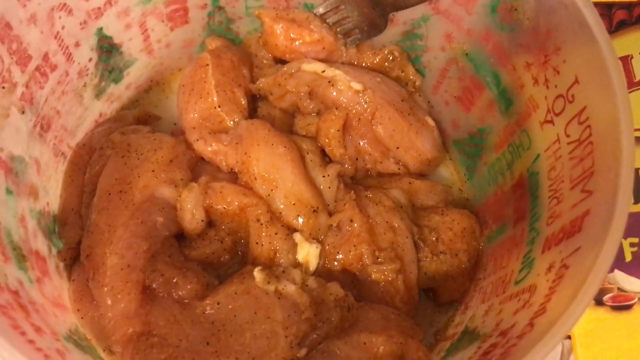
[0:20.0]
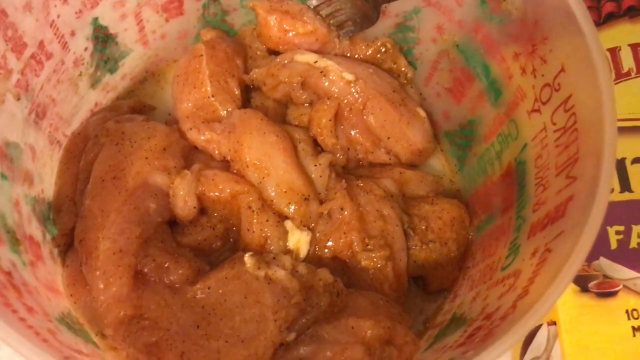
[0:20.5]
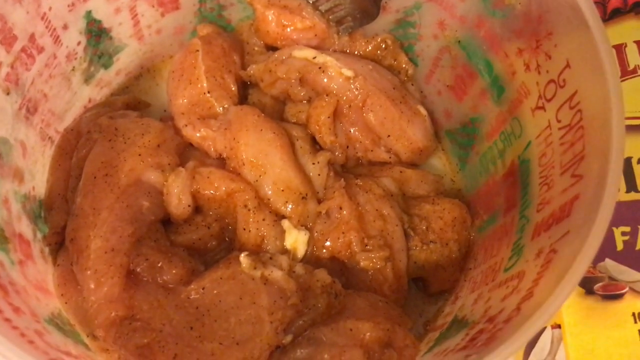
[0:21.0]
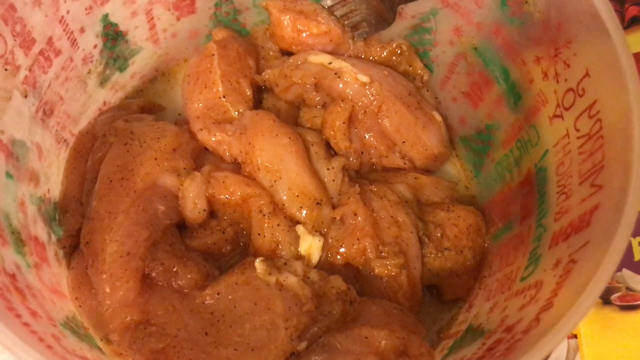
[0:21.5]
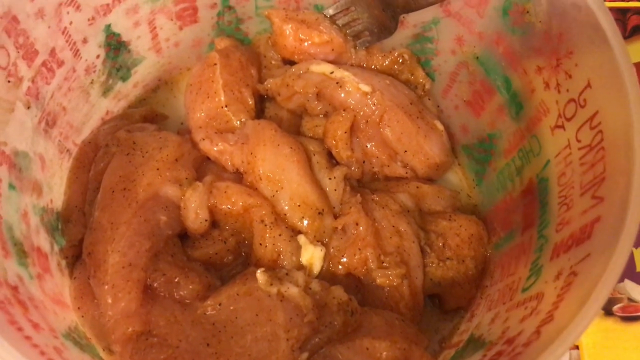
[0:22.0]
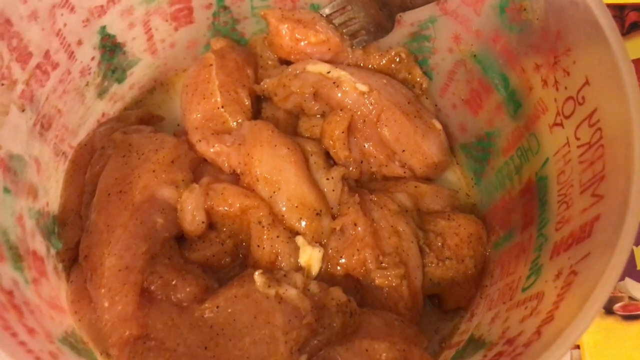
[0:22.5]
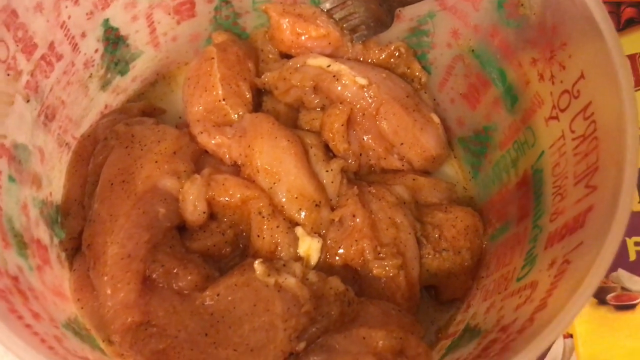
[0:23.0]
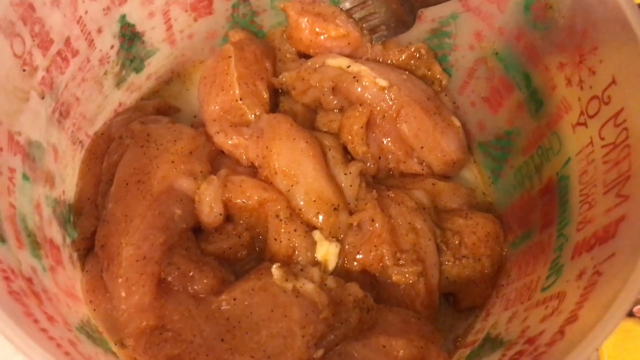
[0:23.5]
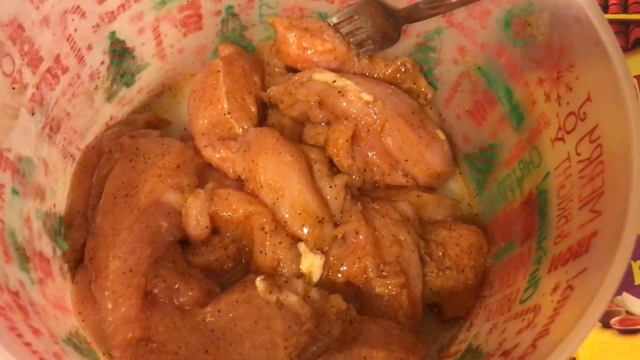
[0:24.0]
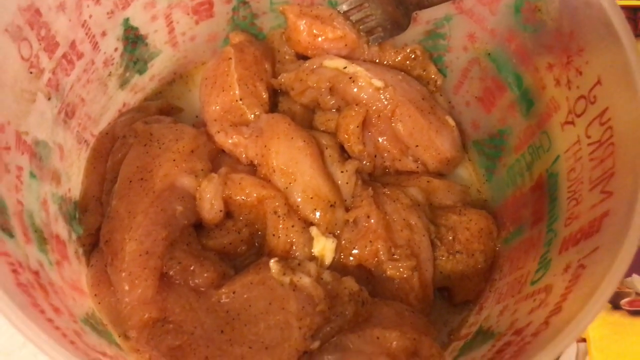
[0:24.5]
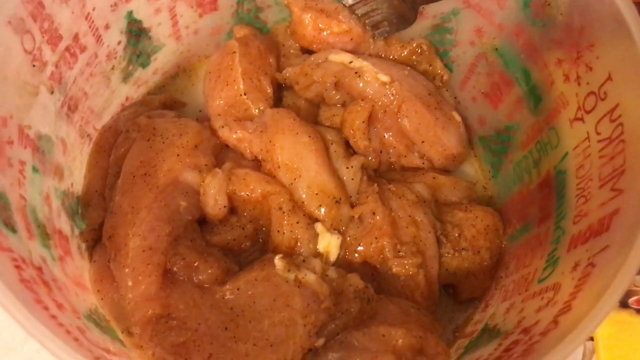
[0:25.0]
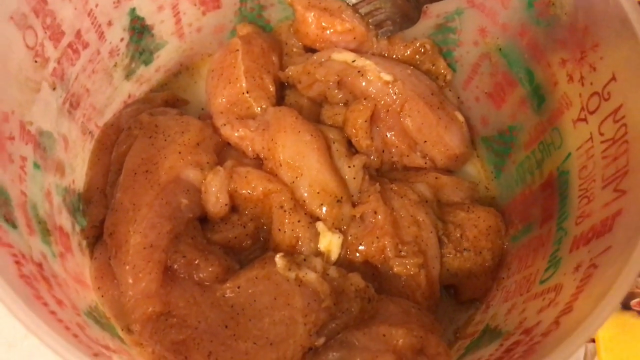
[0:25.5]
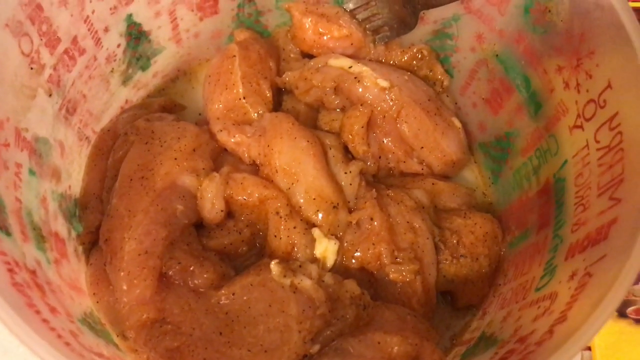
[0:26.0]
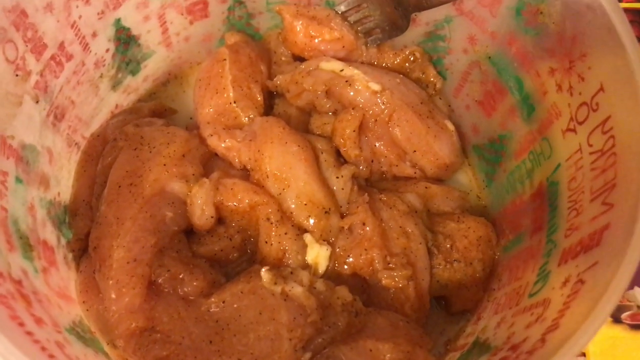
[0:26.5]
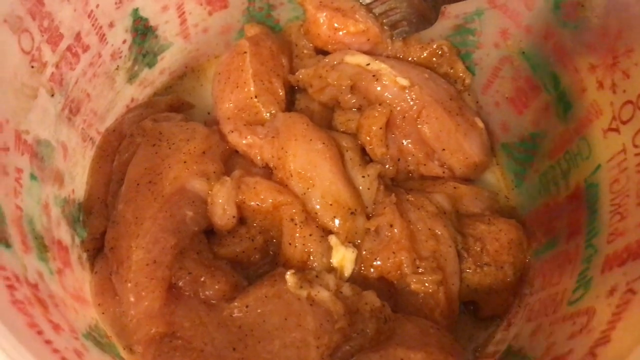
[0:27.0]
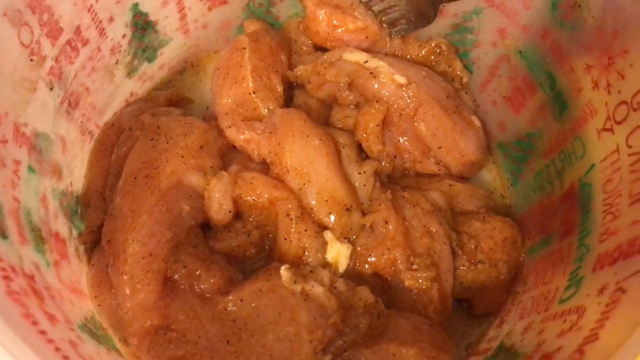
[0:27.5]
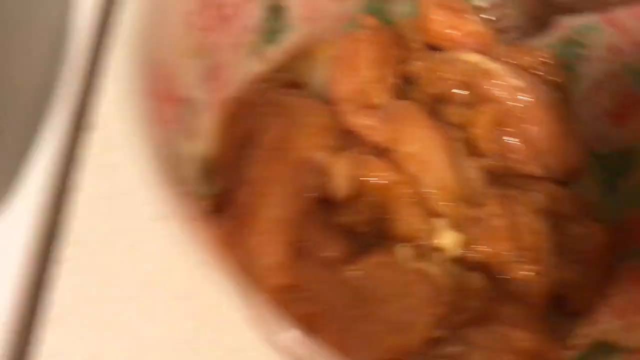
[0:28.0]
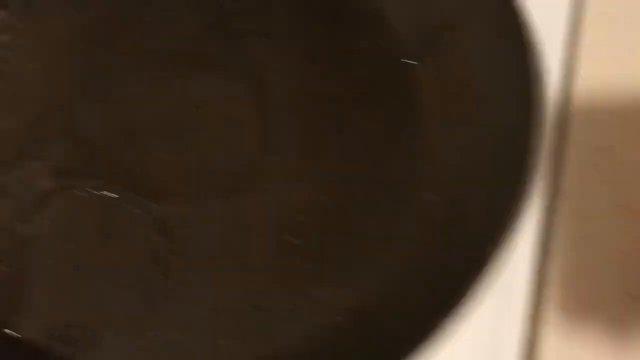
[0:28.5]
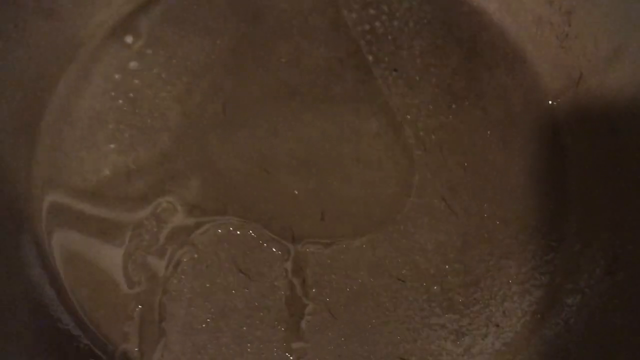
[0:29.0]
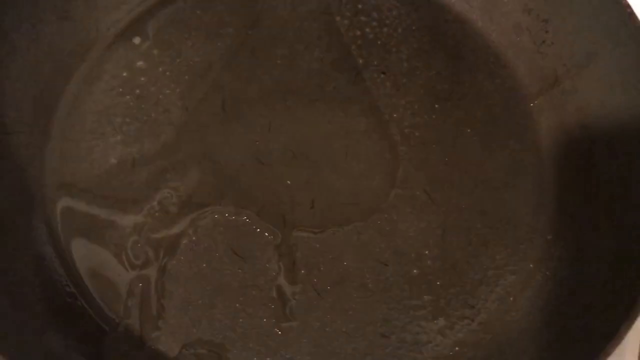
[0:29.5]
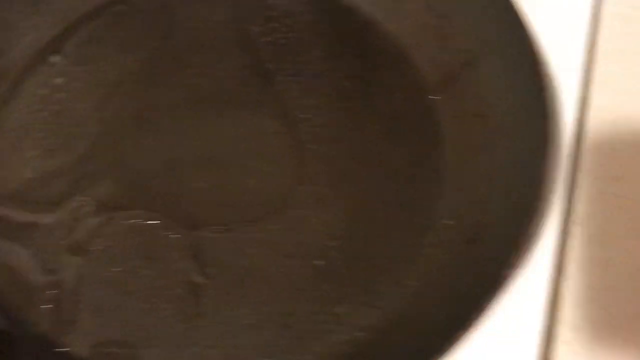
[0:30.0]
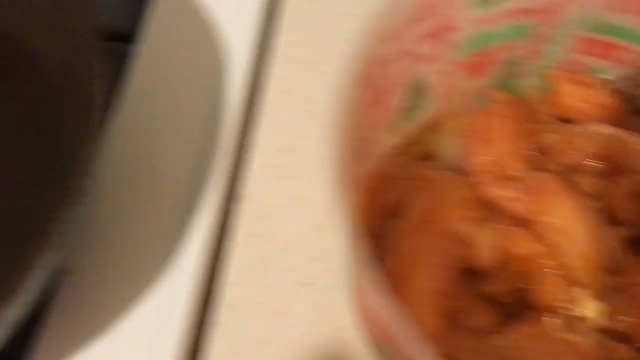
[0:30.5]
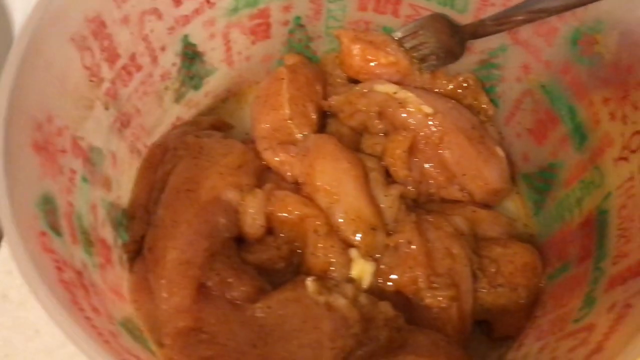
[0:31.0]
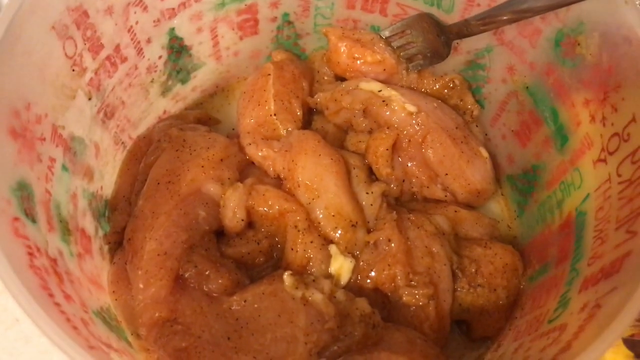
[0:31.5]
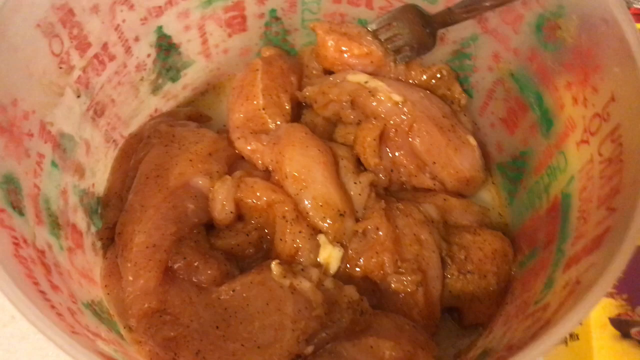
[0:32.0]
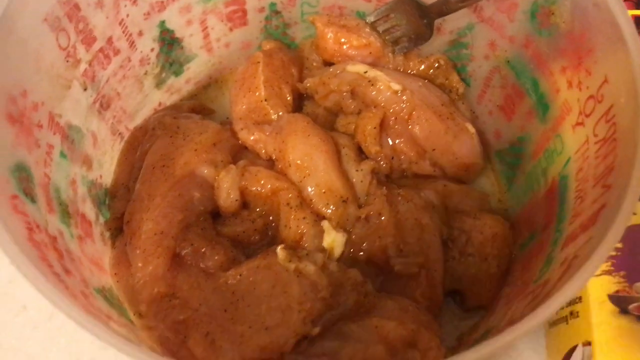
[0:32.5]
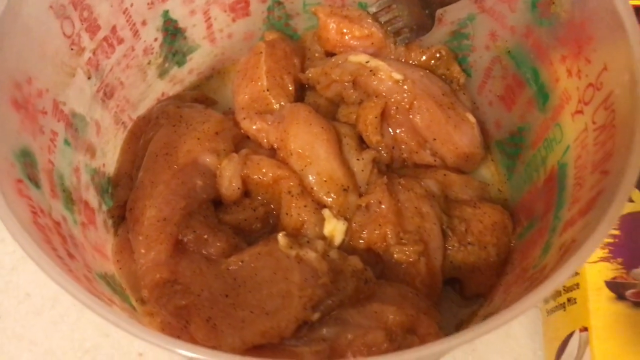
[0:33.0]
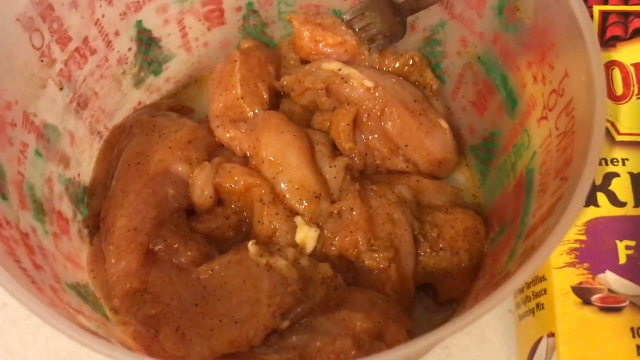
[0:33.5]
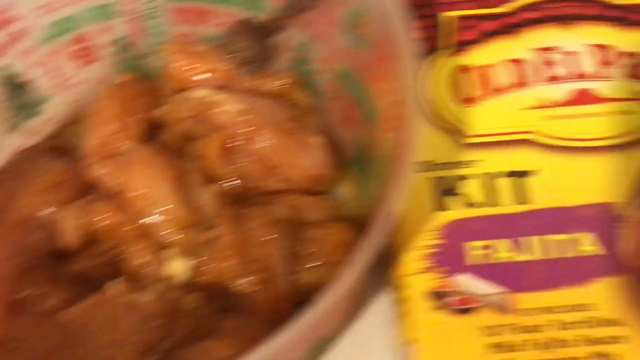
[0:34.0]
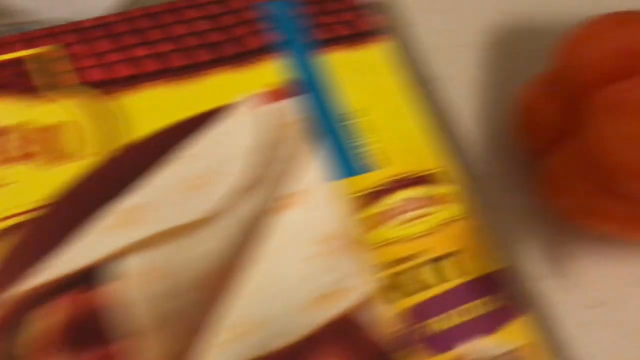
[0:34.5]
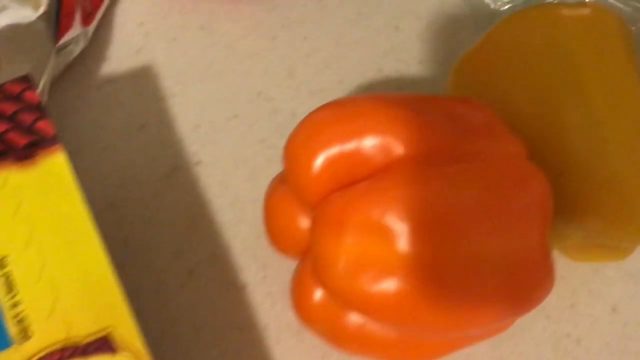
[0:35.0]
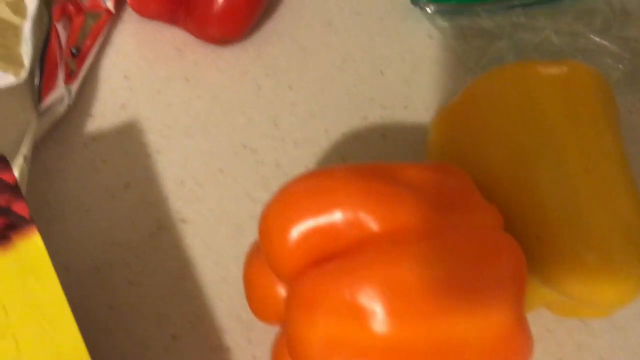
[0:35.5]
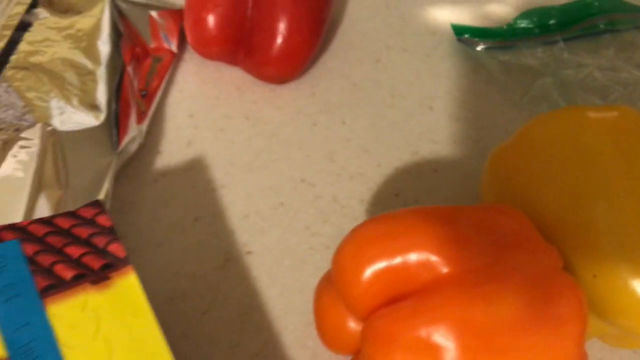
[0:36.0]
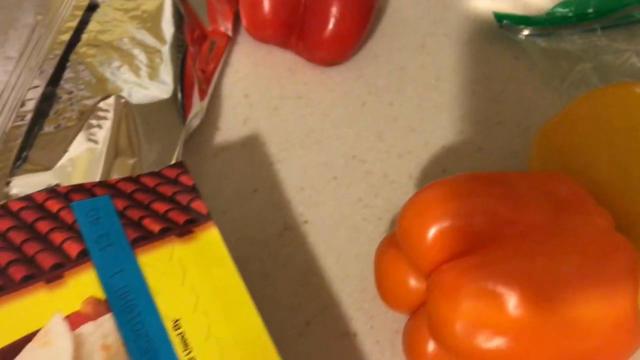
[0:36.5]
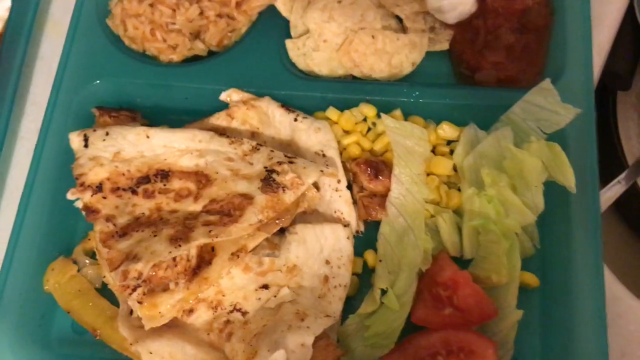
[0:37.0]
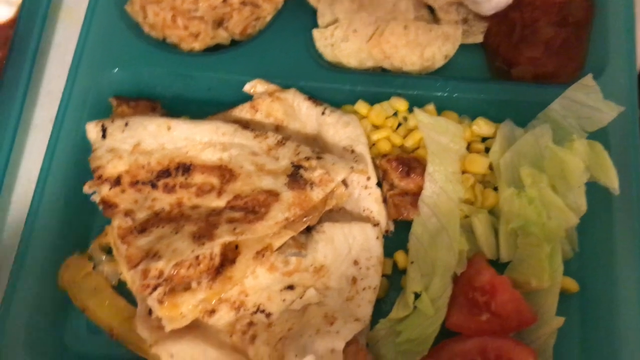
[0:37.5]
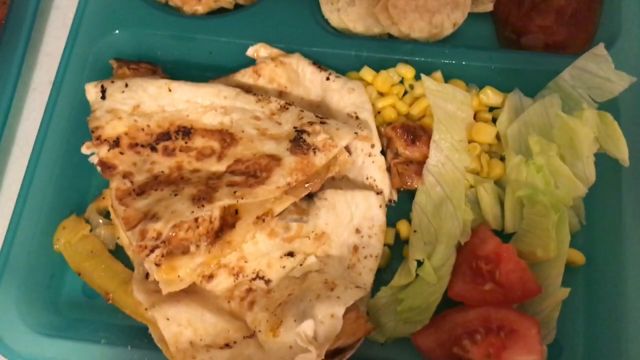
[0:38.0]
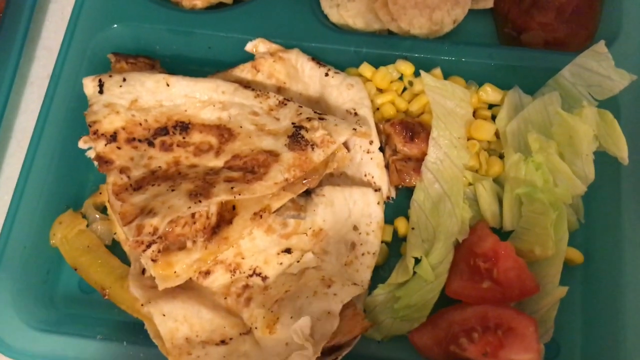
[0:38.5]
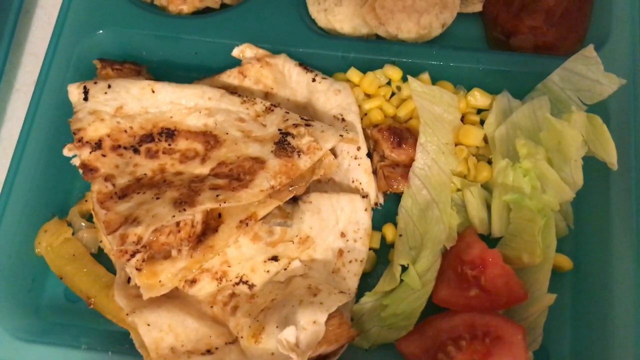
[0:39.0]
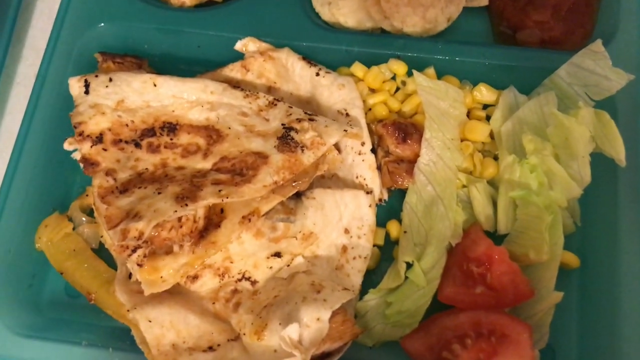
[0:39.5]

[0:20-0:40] A close-up shows the seasoned chicken in front of the Christmas-themed plastic bowl, with the fork still visible in the upper part of the frame. The person moves the camera around, apparently talking about the chicken. The camera pans left to what looks to be oil heating up in a pan on the stove, then the video switches back to the chicken in the bowl. The camera pans right to an orange, a yellow and a red bell pepper sitting on the counter. The video then switches to the prepared dinner: what looks to be a chicken and cheese quesadilla, with corn, lettuce and tomato on the plate. There is some other side in the top left corner, and on the right side there seem to be chips and salsa. What is in the top left portion of the tray the food is in cannot really be seen because it is cut off in the frame.